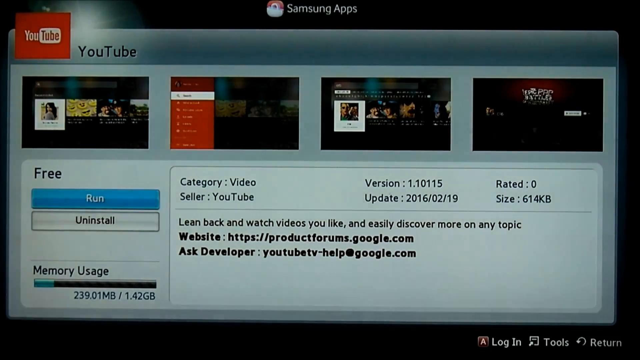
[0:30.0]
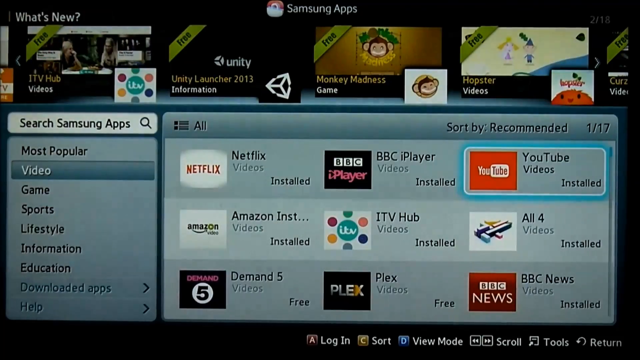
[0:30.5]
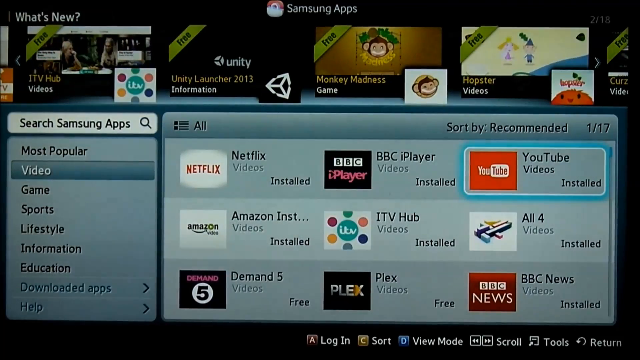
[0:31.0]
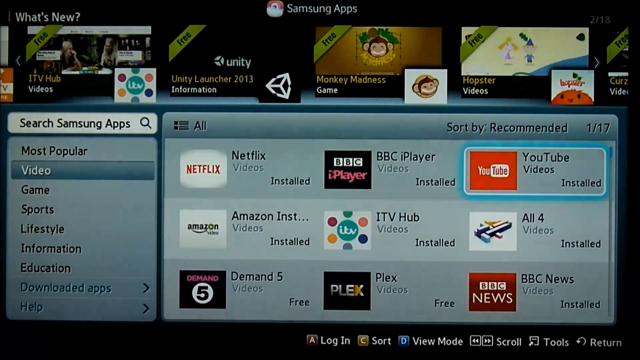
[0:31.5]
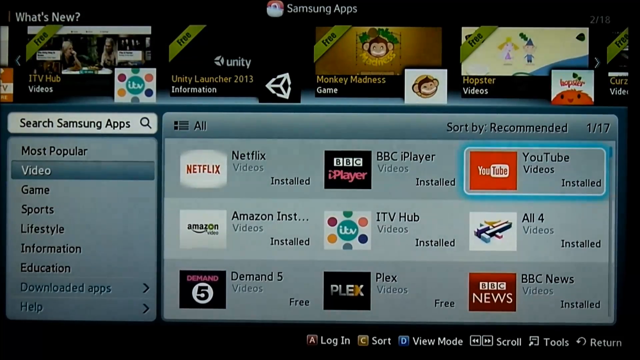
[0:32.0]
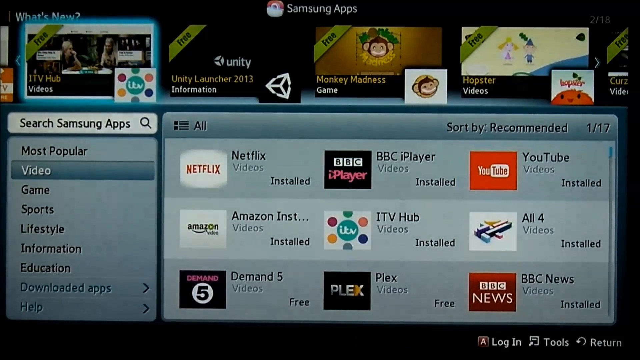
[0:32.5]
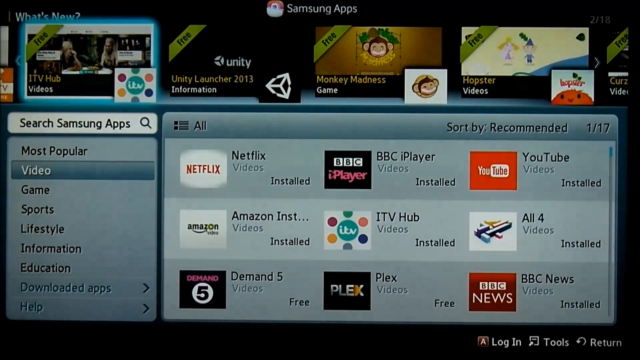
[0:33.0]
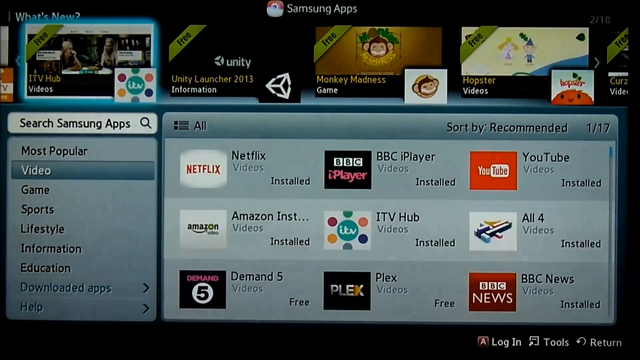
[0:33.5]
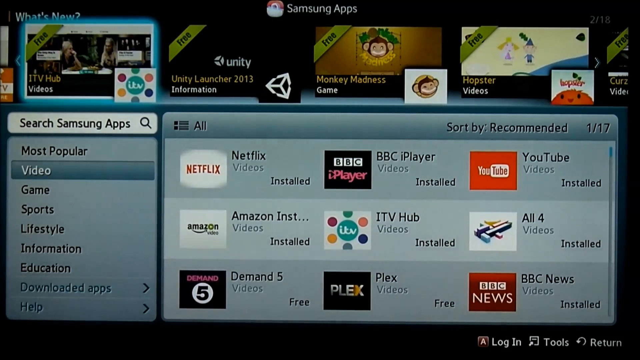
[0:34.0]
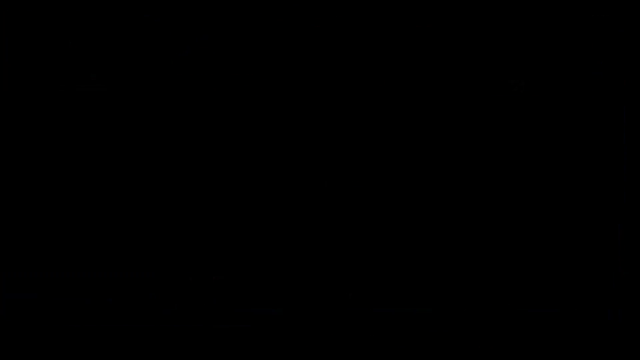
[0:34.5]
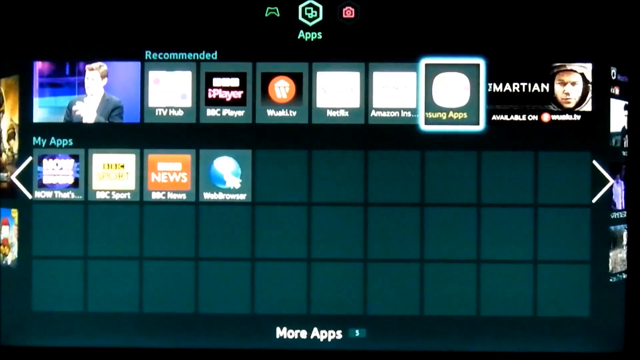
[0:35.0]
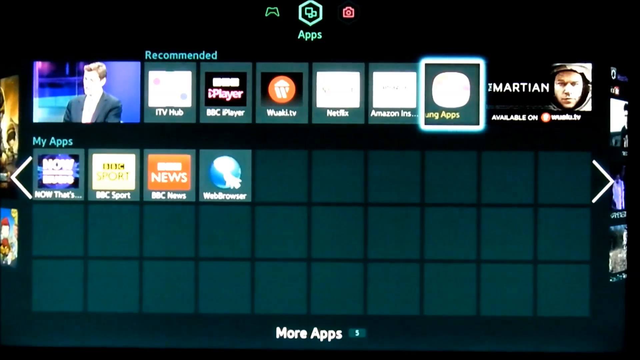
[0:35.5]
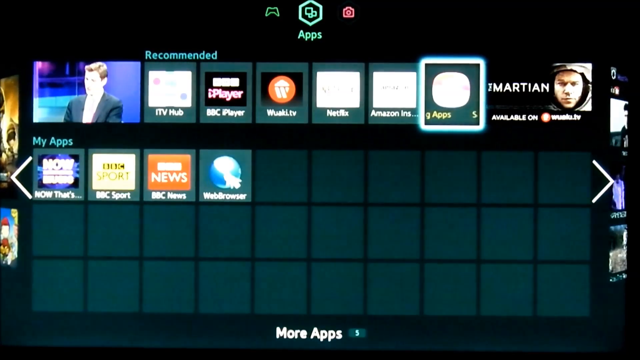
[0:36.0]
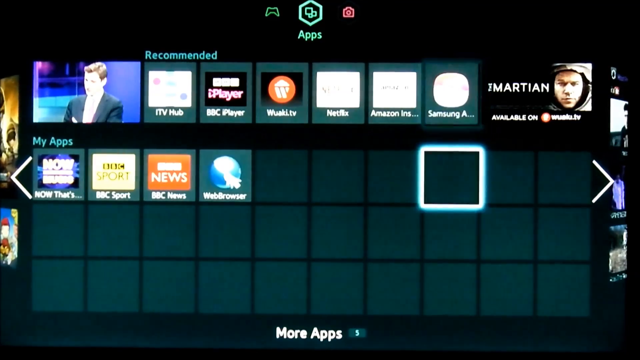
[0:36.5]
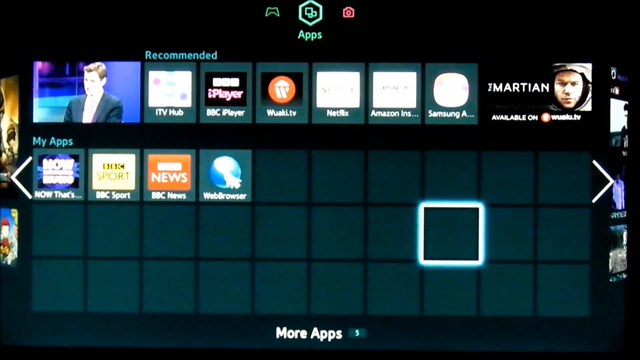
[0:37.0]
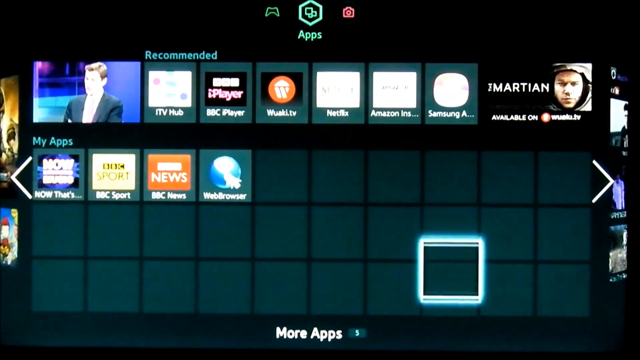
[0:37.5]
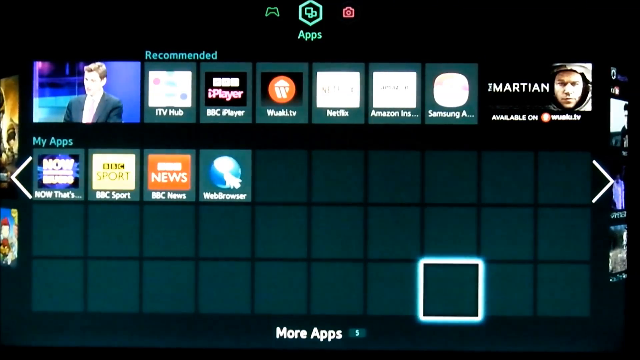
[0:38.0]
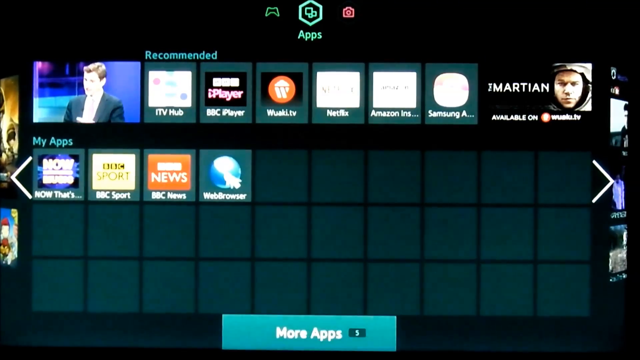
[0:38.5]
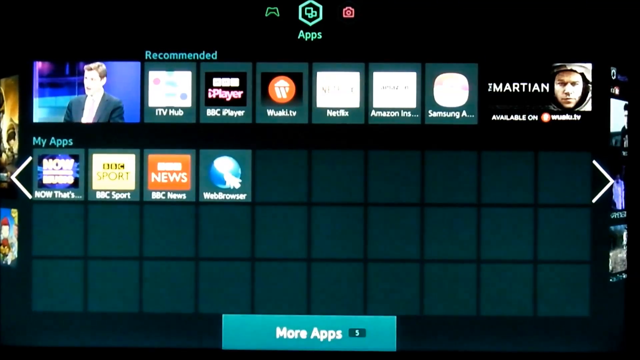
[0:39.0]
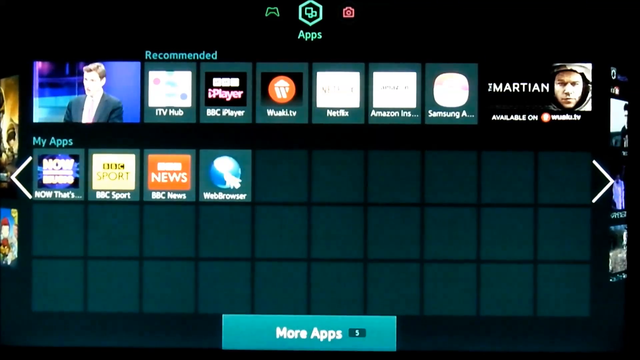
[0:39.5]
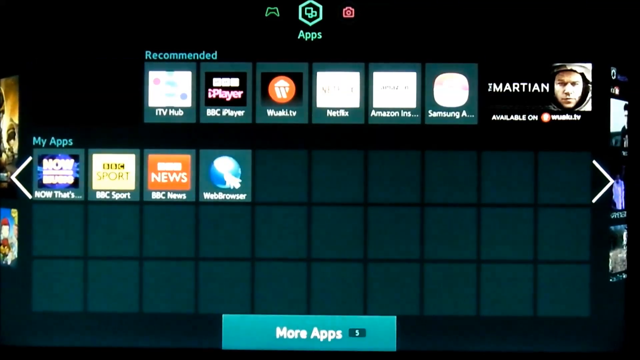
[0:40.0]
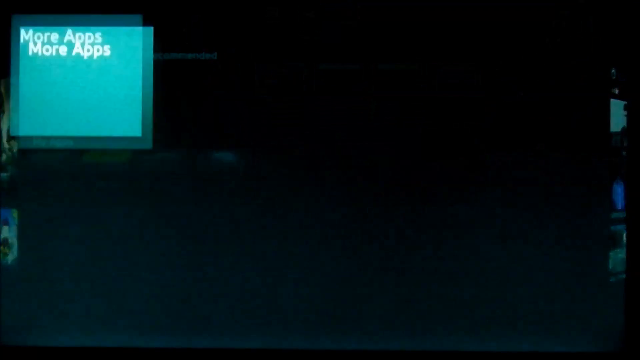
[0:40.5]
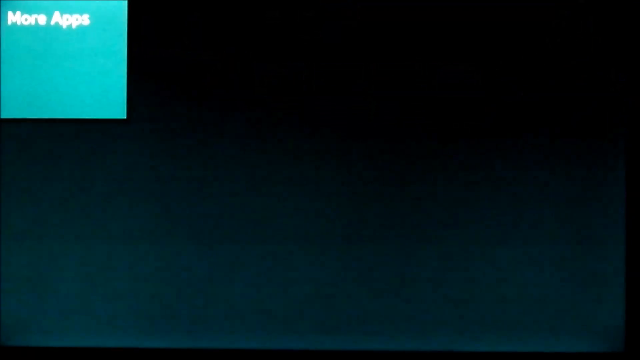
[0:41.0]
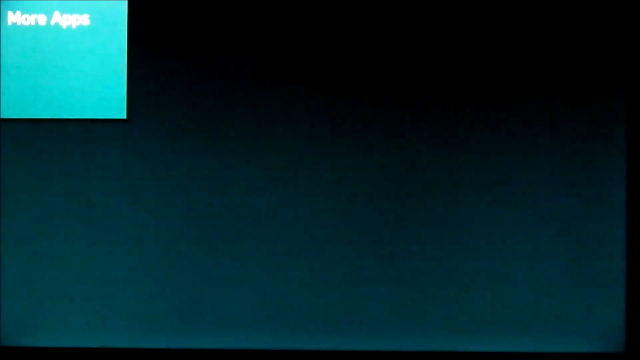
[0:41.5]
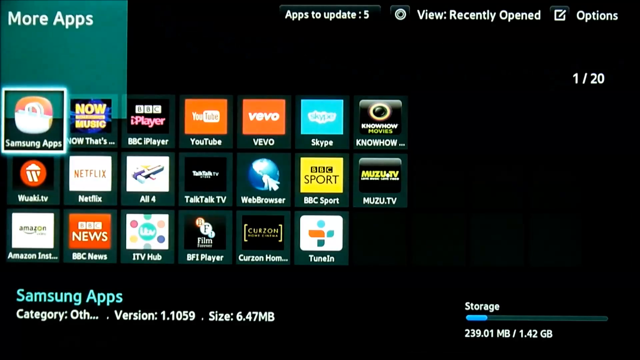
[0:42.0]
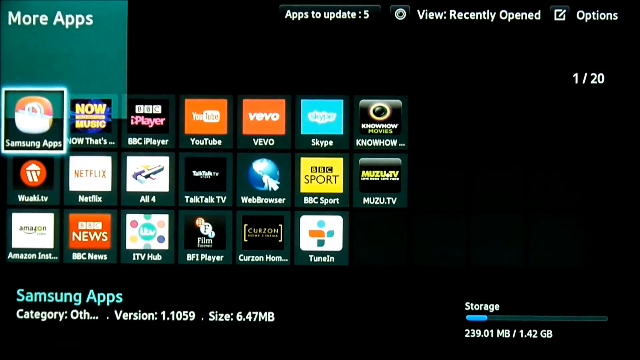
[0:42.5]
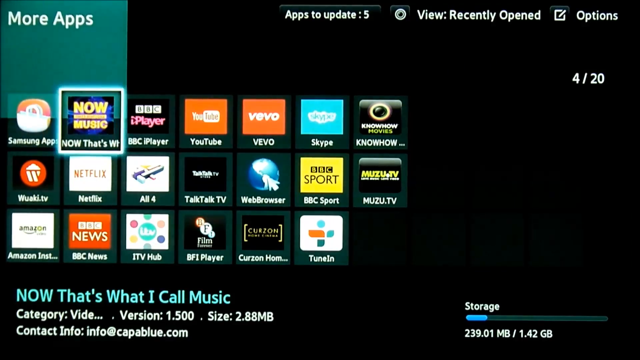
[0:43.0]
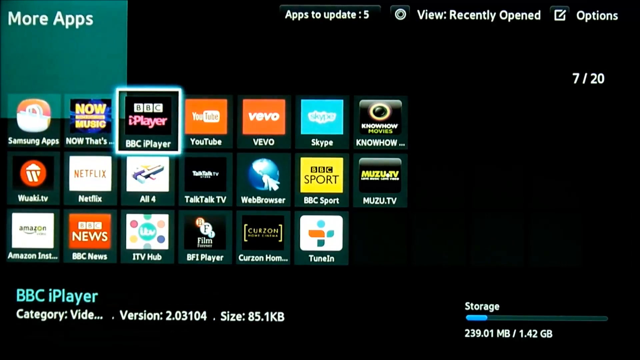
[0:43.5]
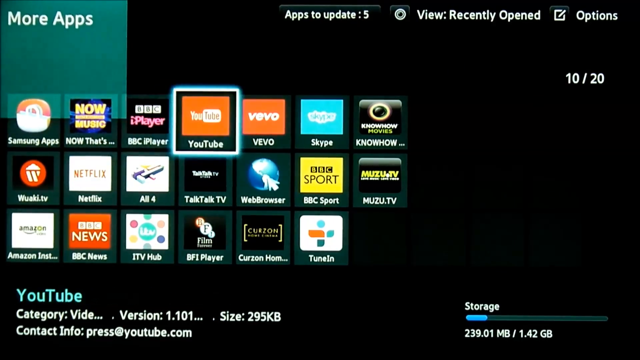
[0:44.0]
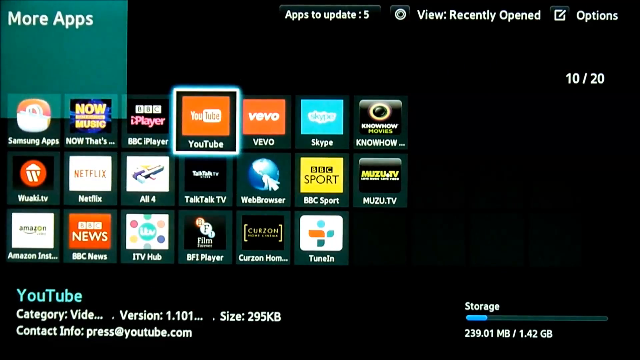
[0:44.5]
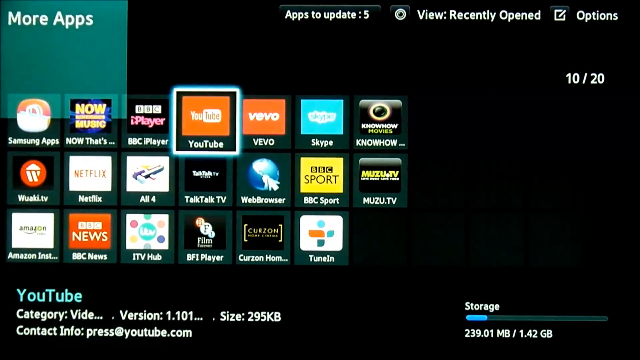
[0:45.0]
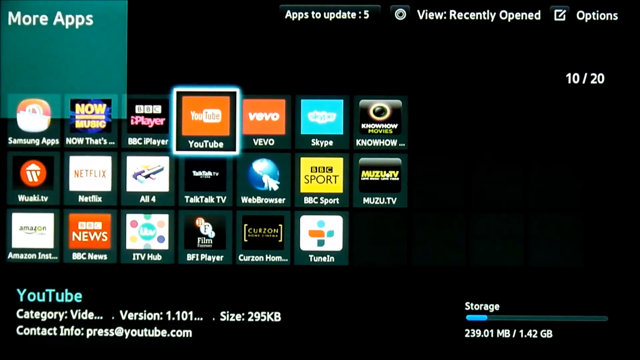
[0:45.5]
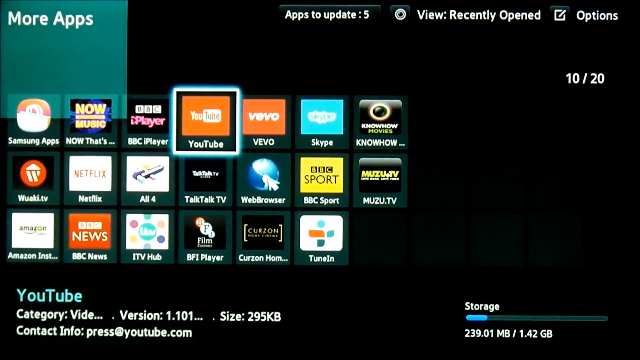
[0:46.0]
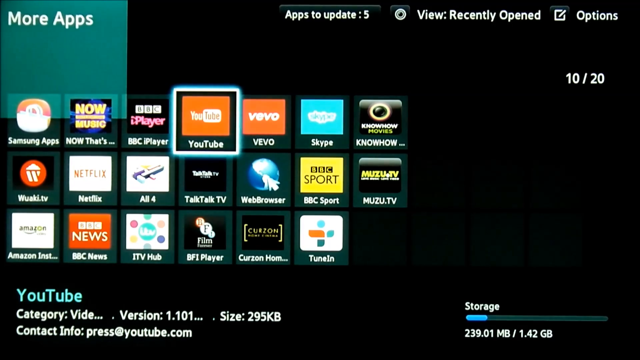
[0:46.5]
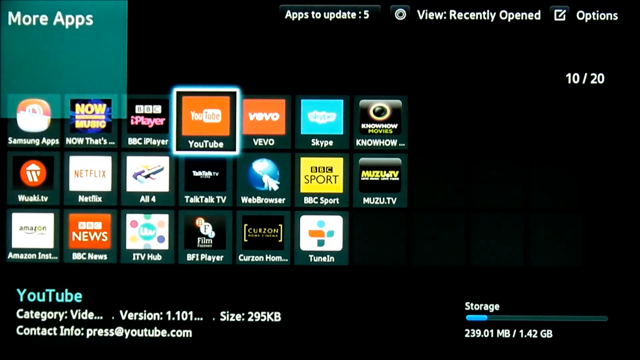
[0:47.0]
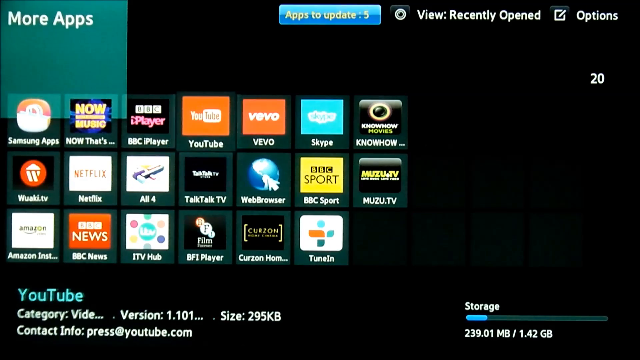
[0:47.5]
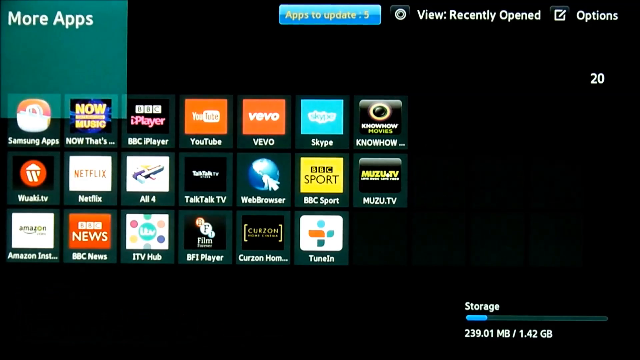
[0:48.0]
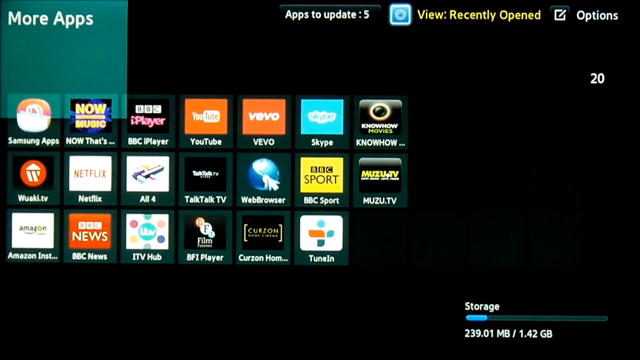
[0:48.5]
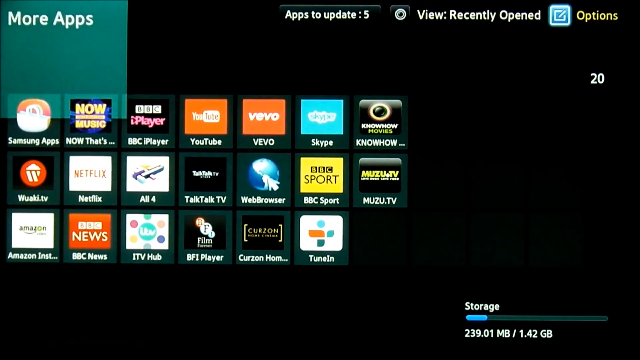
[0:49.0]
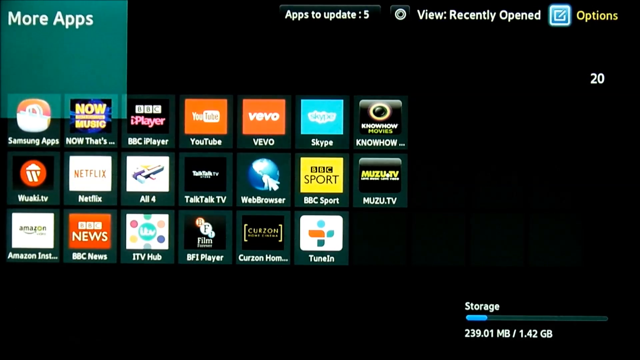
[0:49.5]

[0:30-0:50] The view goes back one screen and then another. The glowing box moves down a grid of little black boxes, some containing icons, though the ones it highlights are empty. A button saying more apps appears and leads to a new screen, which shows that five apps need an update and displays more icons, such as Now That's What I Call Music, All Four and Curzon. YouTube appears here, and the selection scrolls across to it. The options button in the very top right-hand corner of the screen is clicked, bringing up a YouTube page just before the shot ends. The image is quite flickery, possibly because the camera is recording a television screen.